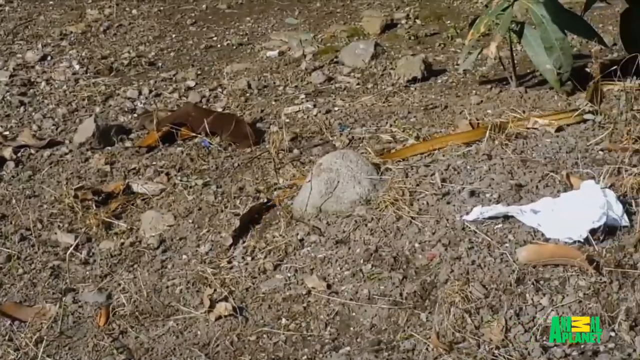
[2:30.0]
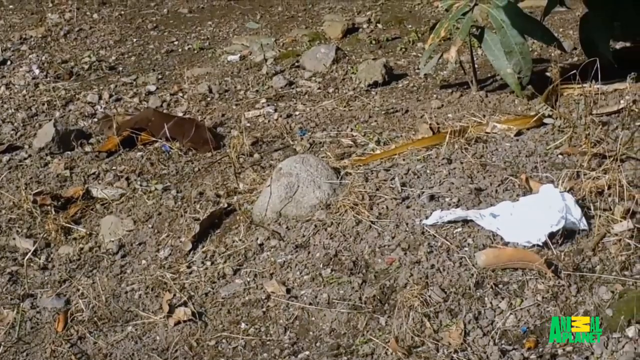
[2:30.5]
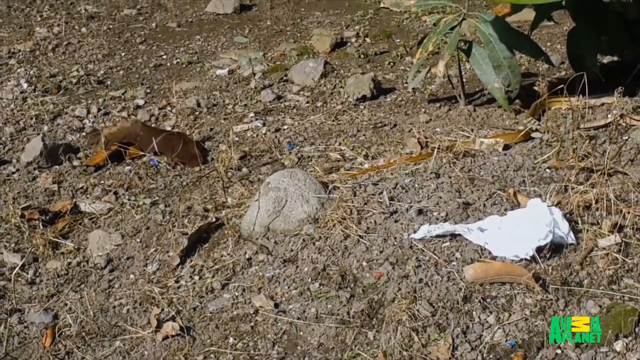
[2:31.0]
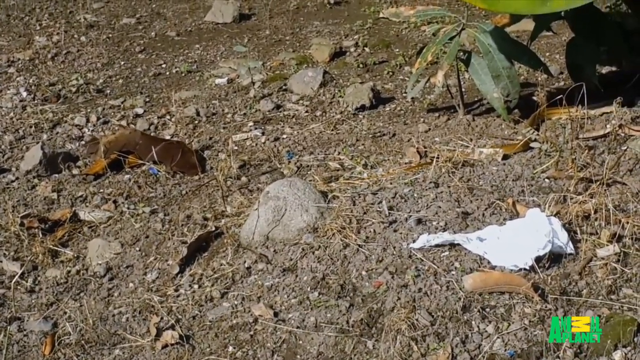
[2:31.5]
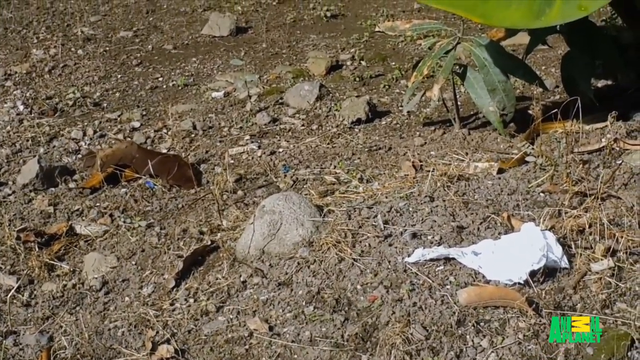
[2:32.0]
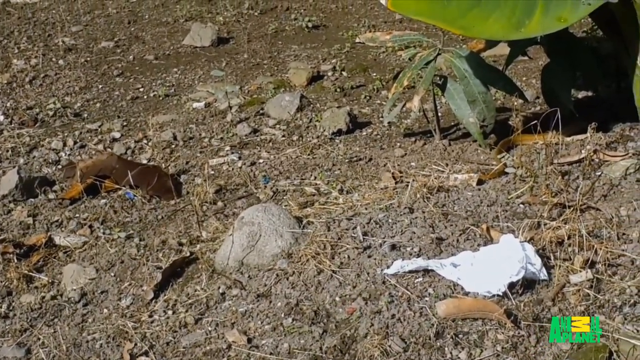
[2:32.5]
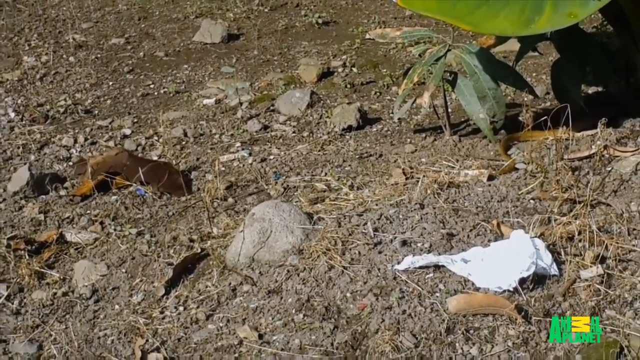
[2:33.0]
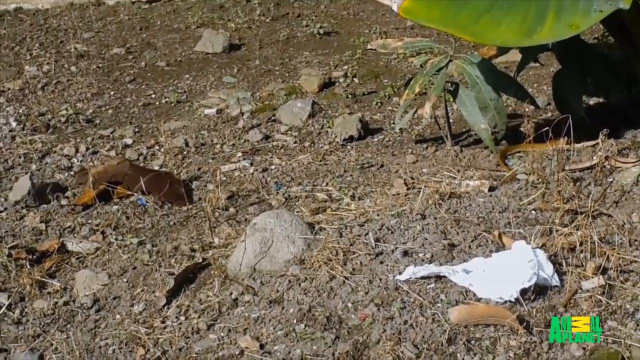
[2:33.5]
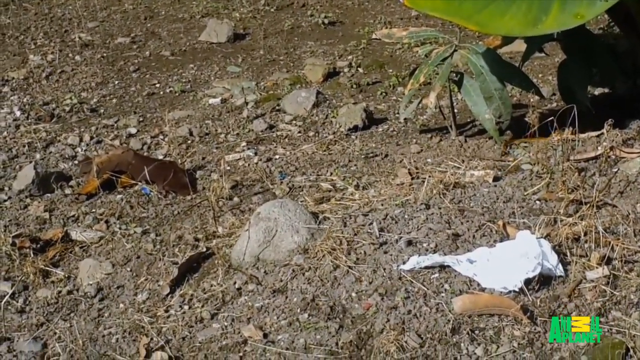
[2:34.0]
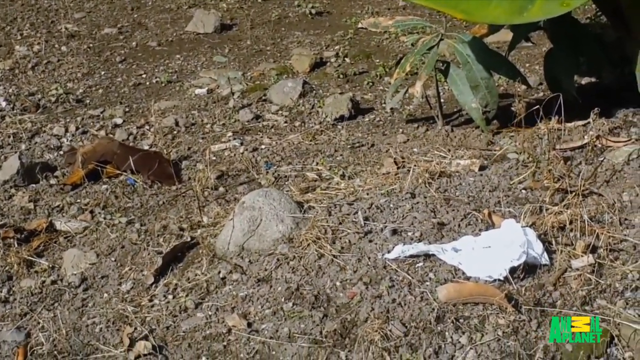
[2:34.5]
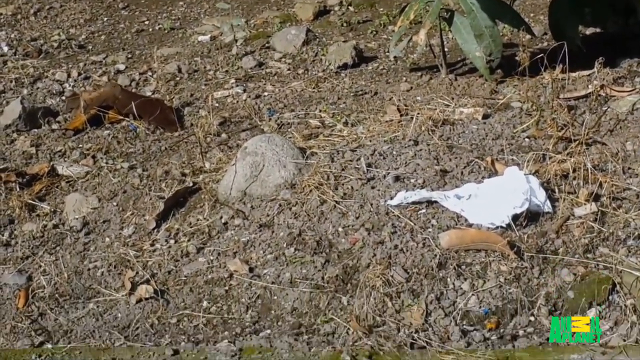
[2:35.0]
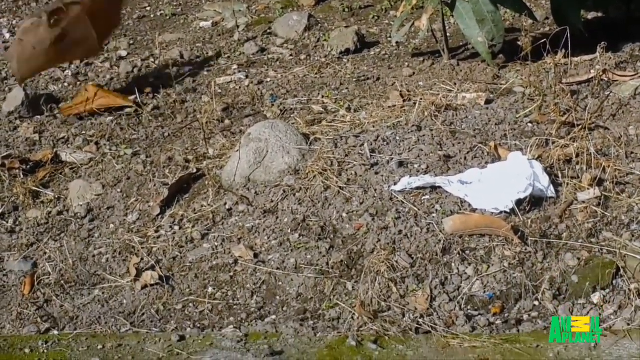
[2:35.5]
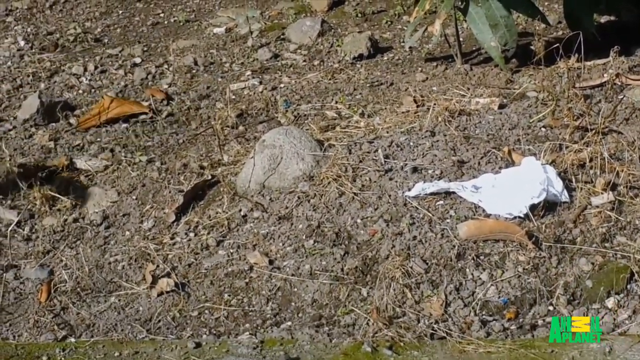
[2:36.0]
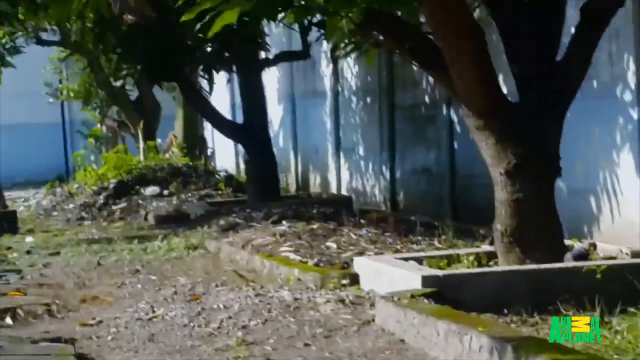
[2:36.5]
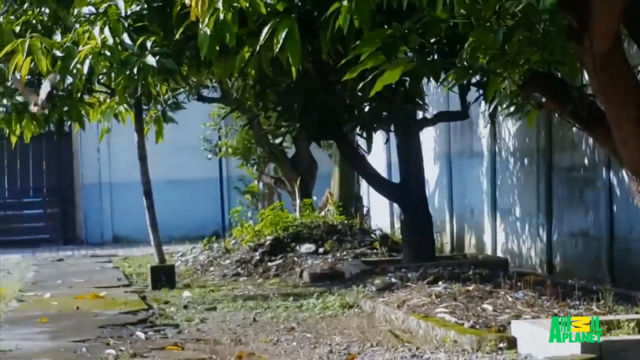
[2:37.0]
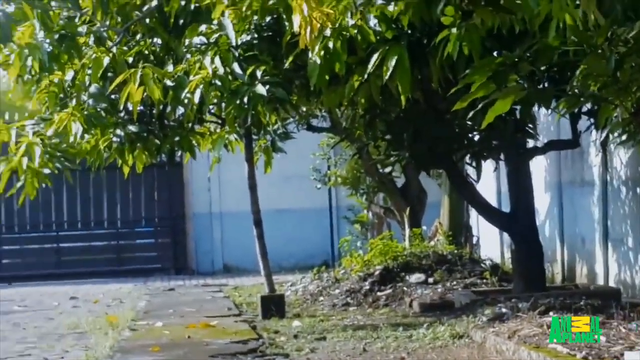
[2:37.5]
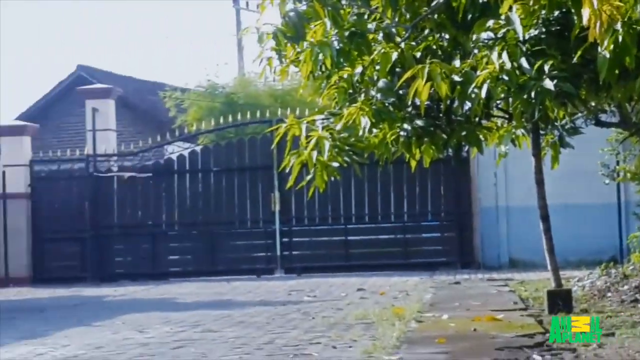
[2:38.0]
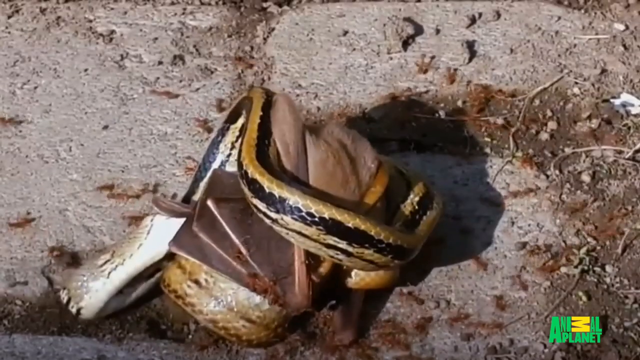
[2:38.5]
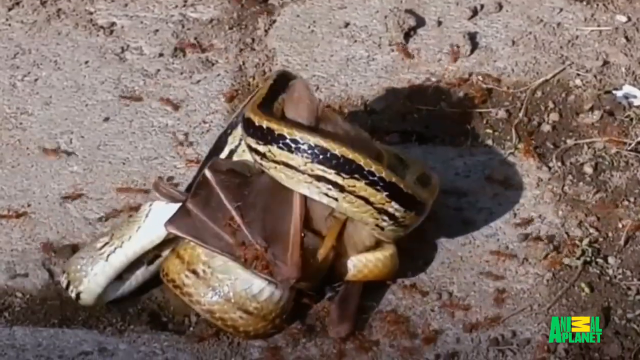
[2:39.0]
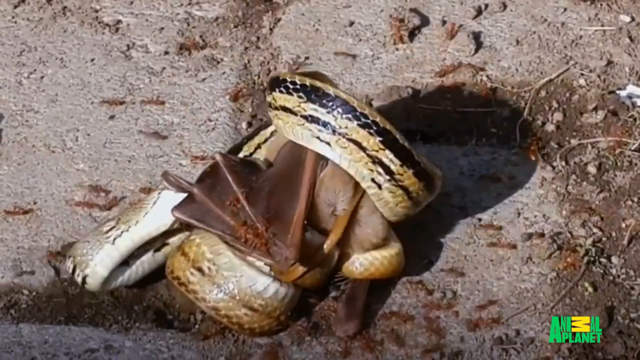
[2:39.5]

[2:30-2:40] The bat appears to have gotten free of the snake's grasp, and the snake crawls over the rocks and twigs into the bushes, disappearing into the shadows. The brown bat flops around on the ground, appears to regain its strength, and flies away across the yard and into the sky over the grey fence and black gate of the driveway.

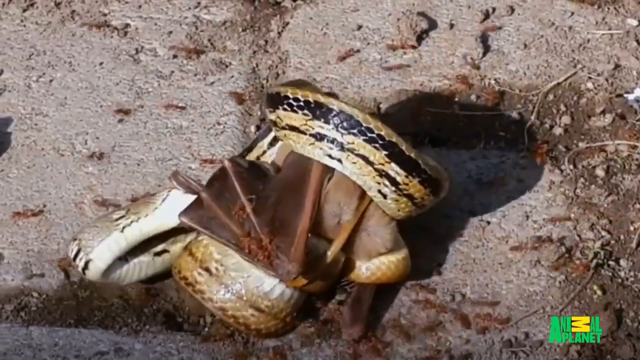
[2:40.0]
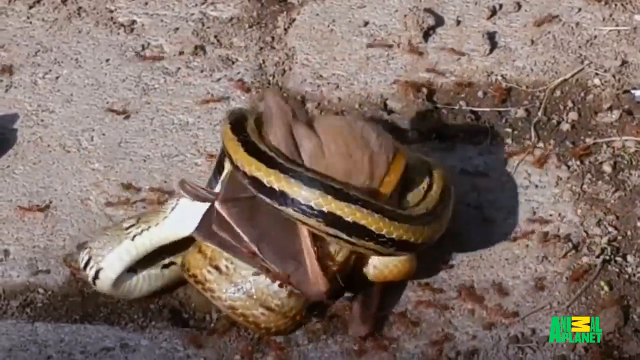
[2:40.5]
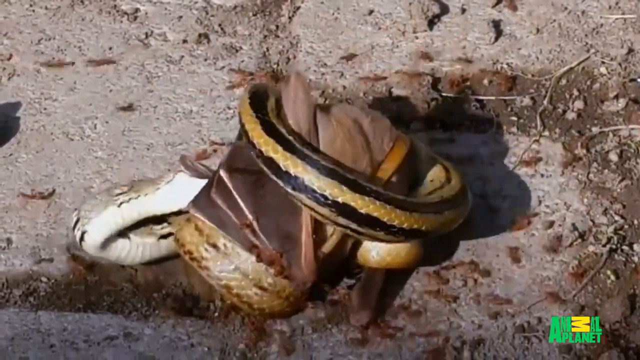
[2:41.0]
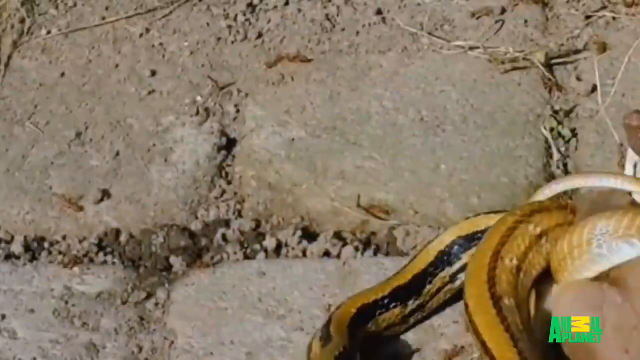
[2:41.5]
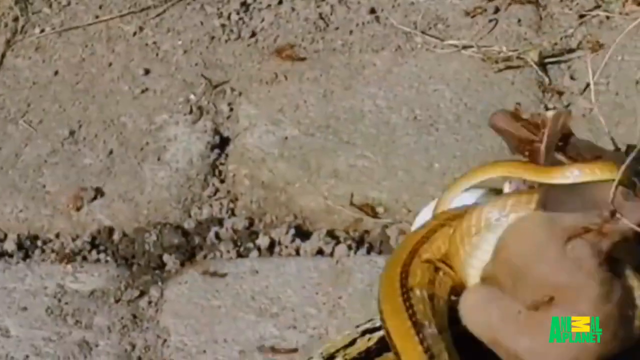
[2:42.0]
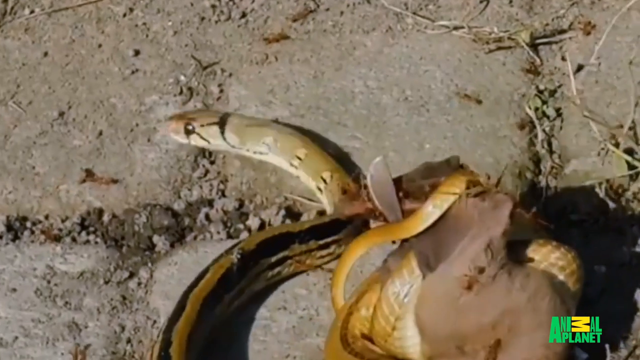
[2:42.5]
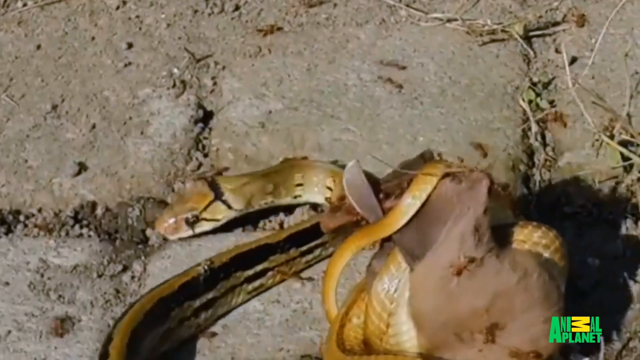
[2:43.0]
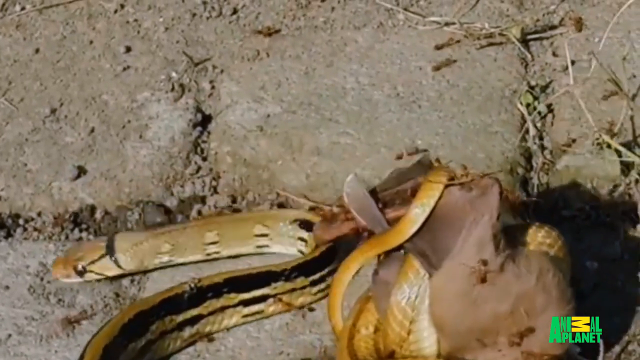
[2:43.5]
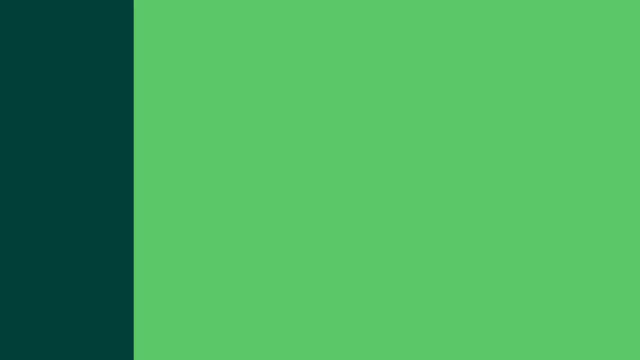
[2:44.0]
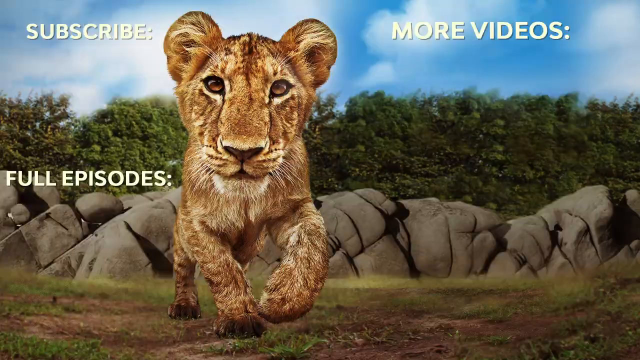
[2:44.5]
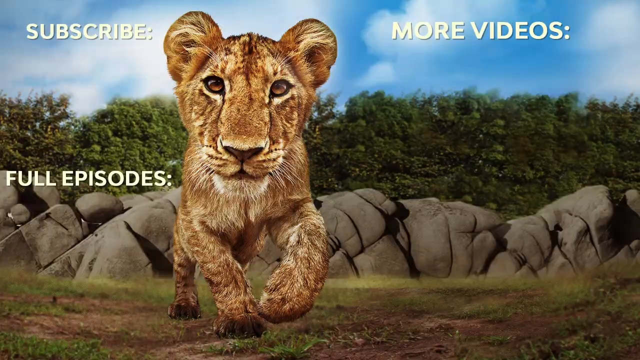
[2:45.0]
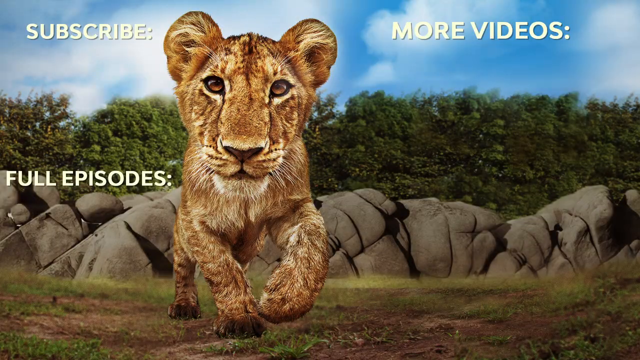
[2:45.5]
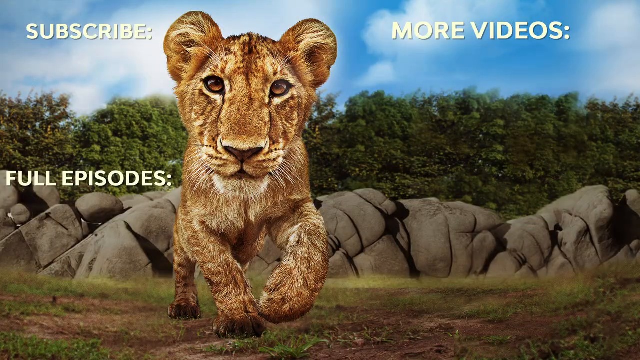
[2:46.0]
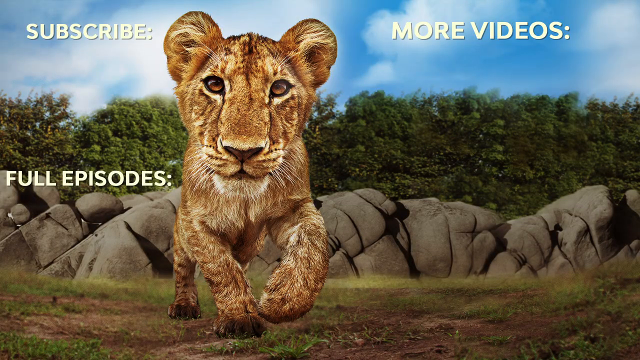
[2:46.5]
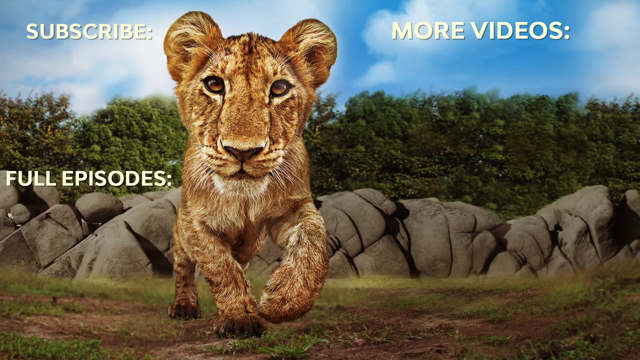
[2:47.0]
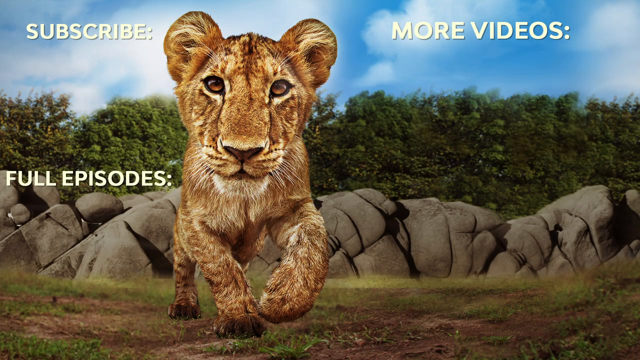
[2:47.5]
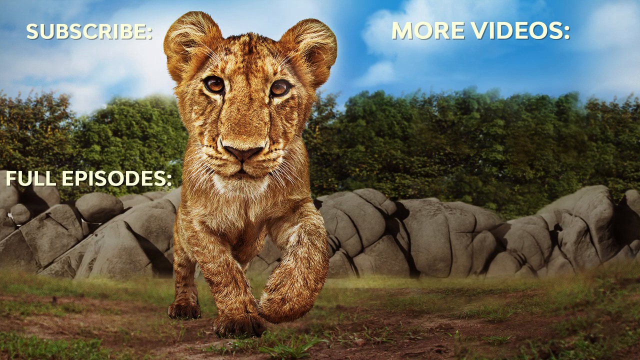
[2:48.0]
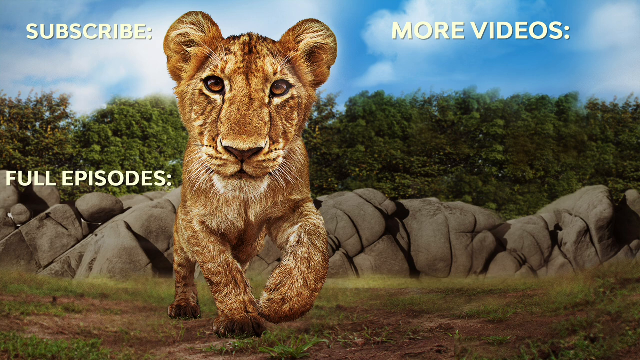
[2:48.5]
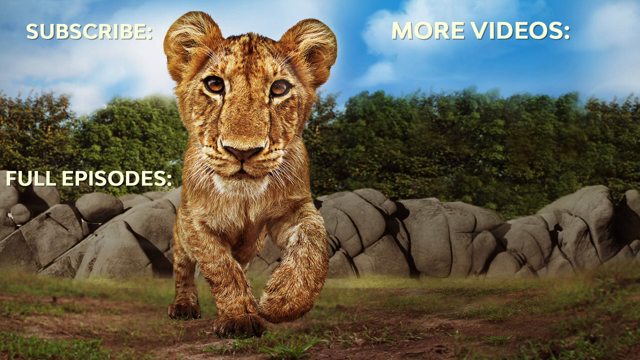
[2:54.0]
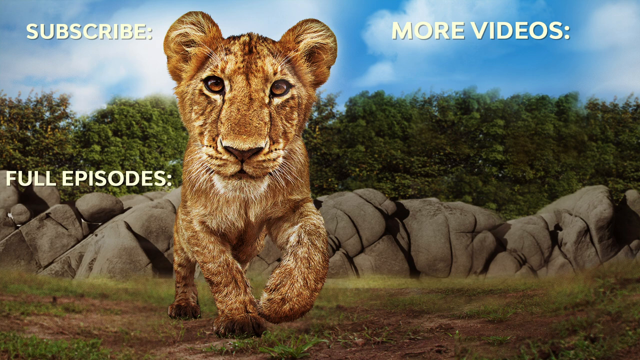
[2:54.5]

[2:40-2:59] On the Animal Planet network, a constrictor-type snake ambushing a brown bat is wrapped up around it and bites it several times, while lots of brown ants crawl all over the snake and the bat as they fight on the ground. The snake is tan or yellowish with long black stripes along the side of its body and some black dots. A green and yellow Animal Planet logo is in the bottom right hand corner.